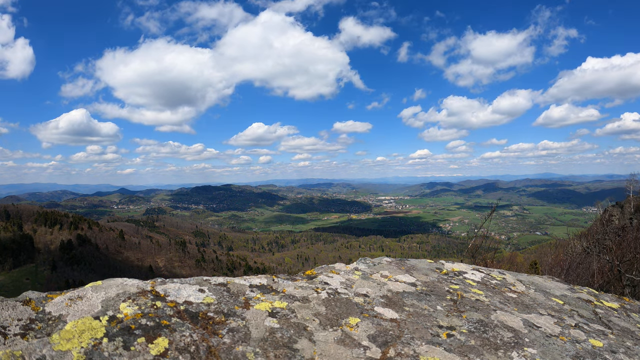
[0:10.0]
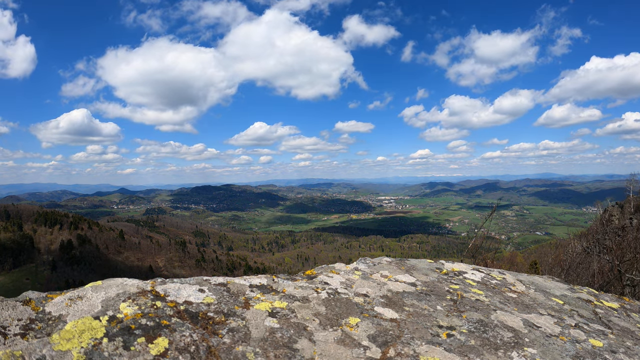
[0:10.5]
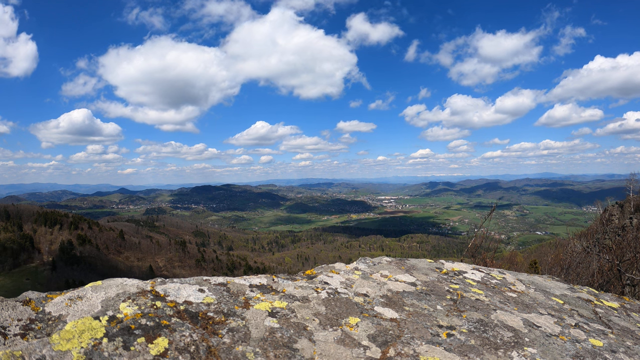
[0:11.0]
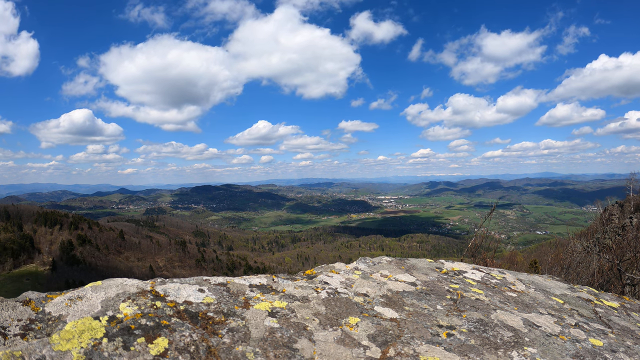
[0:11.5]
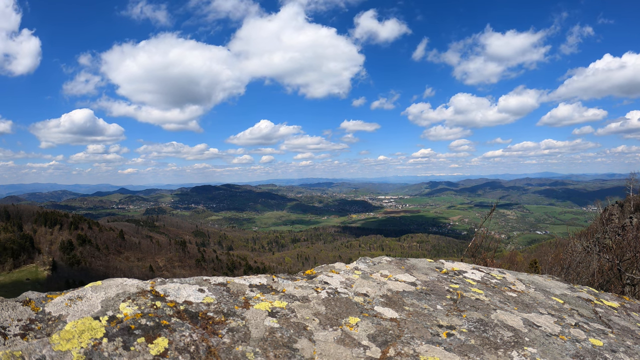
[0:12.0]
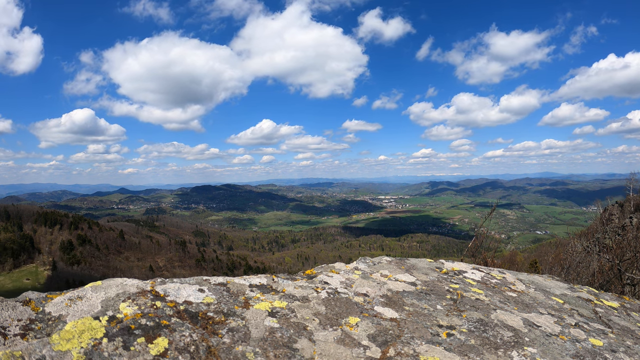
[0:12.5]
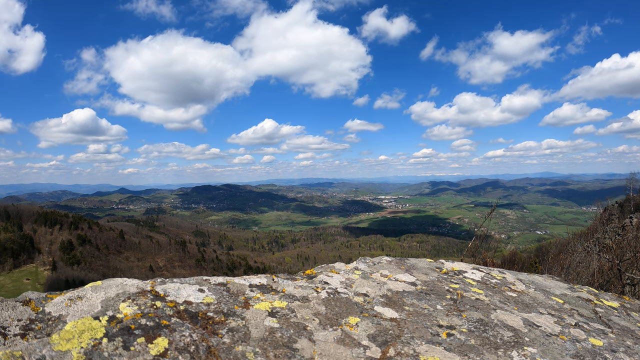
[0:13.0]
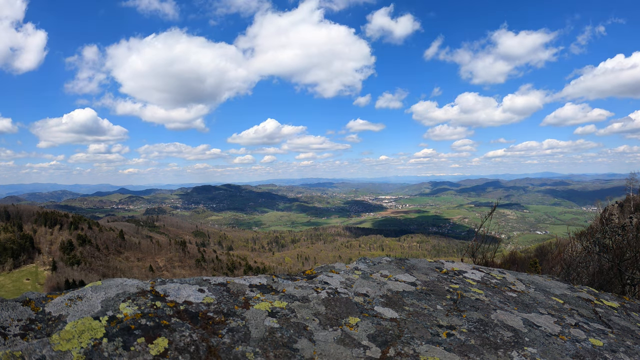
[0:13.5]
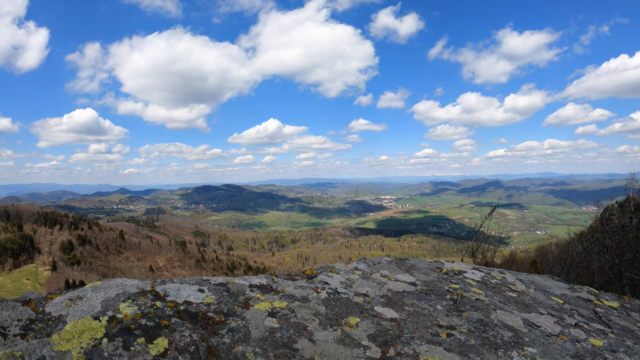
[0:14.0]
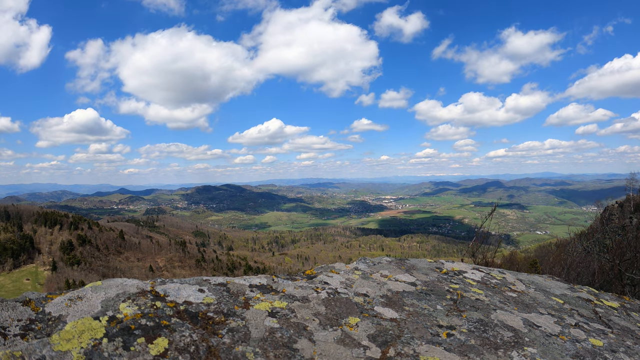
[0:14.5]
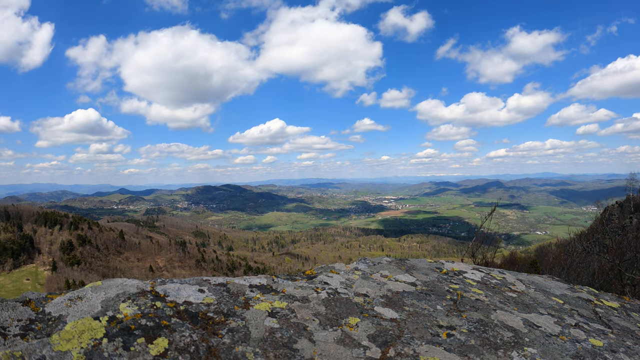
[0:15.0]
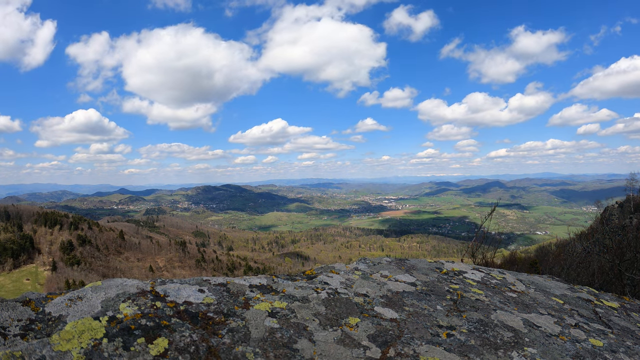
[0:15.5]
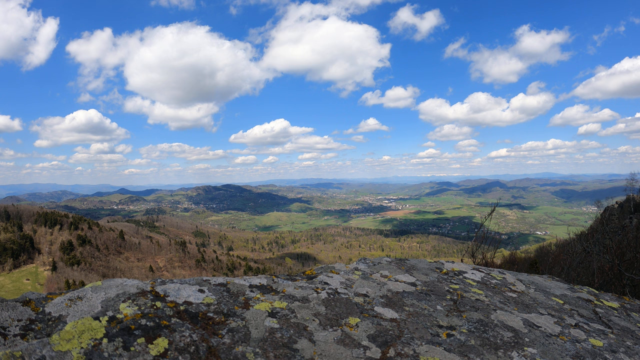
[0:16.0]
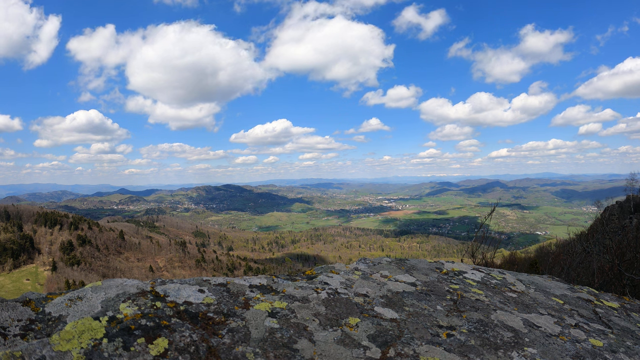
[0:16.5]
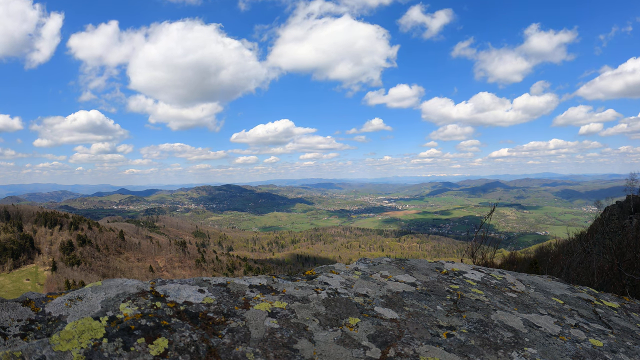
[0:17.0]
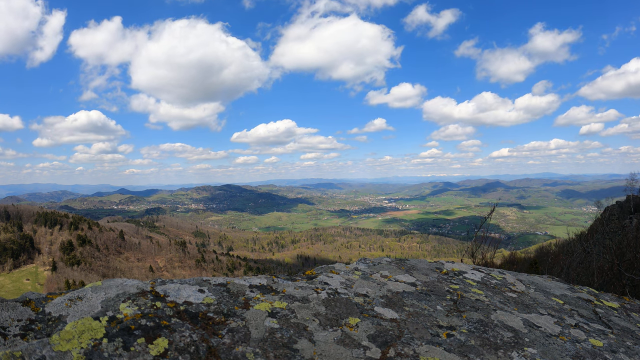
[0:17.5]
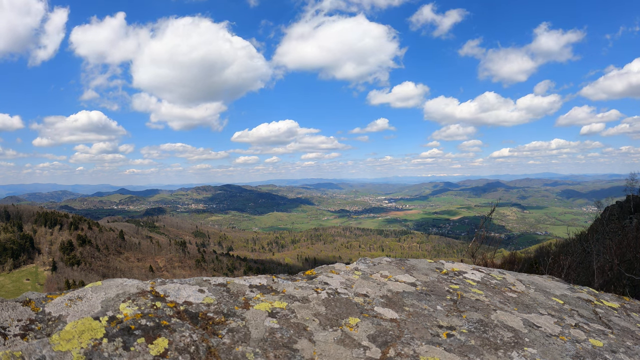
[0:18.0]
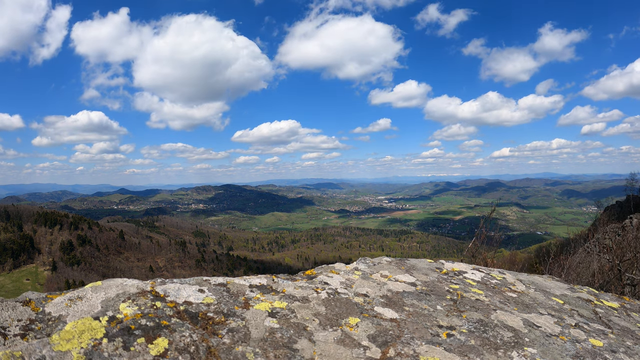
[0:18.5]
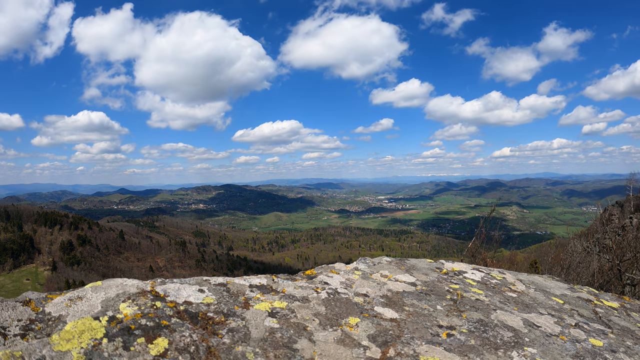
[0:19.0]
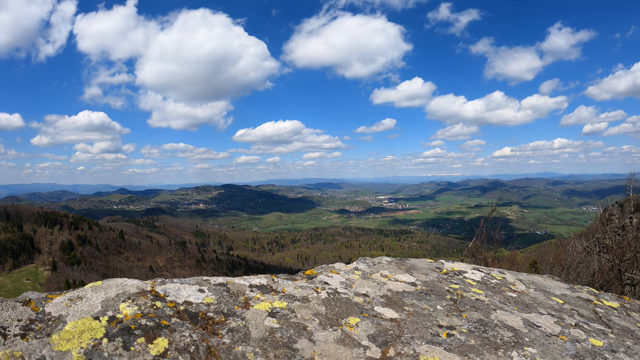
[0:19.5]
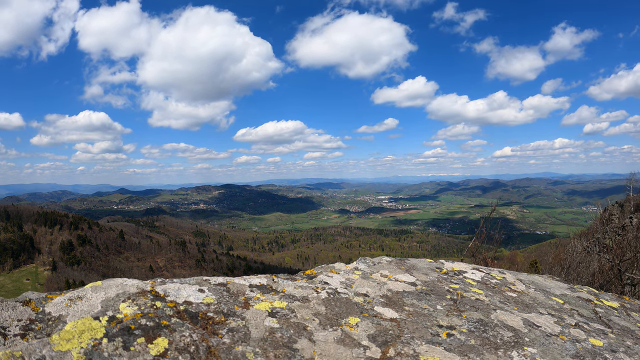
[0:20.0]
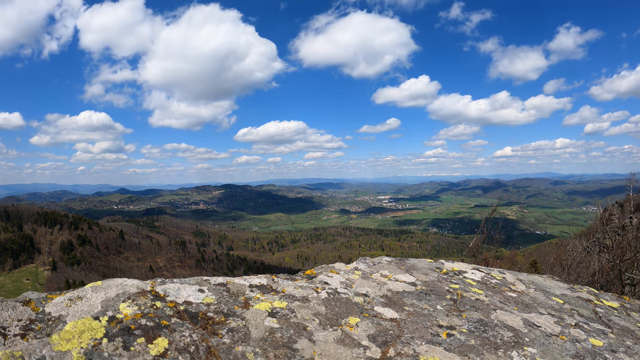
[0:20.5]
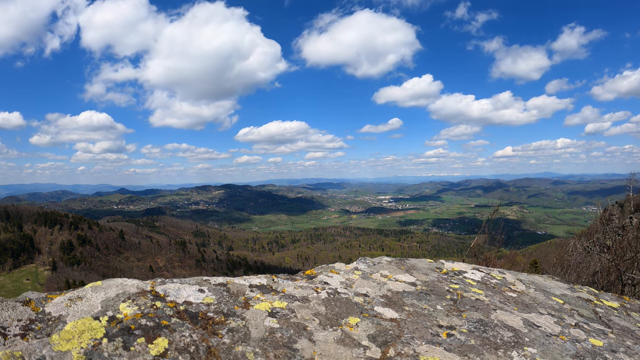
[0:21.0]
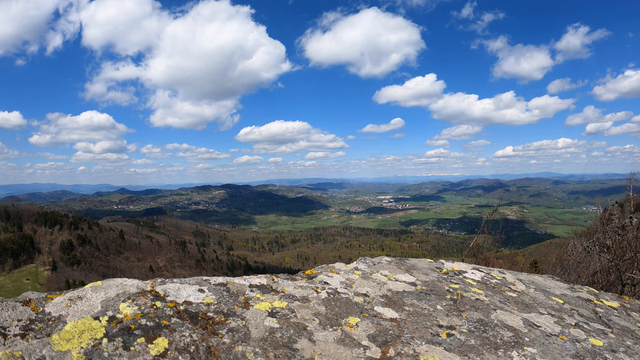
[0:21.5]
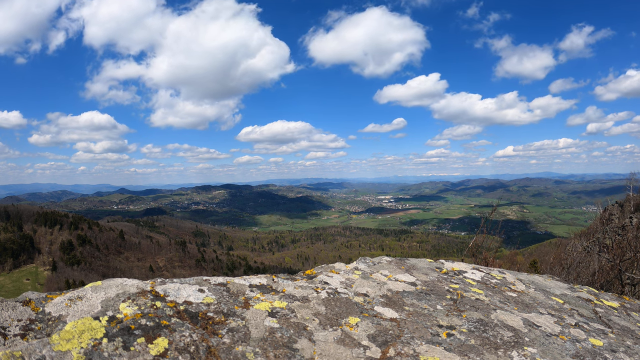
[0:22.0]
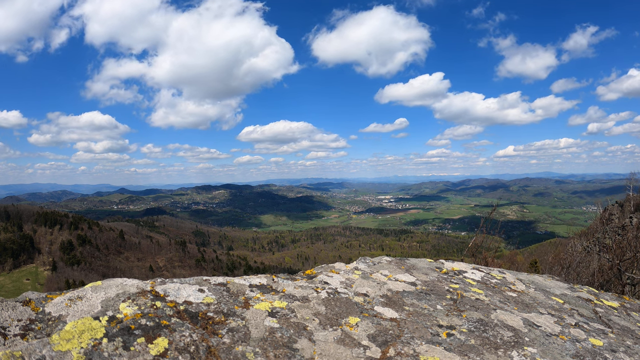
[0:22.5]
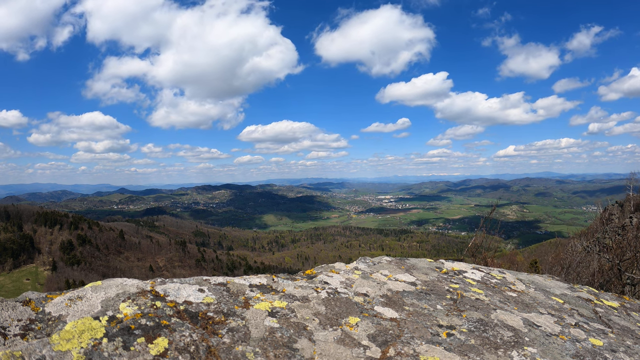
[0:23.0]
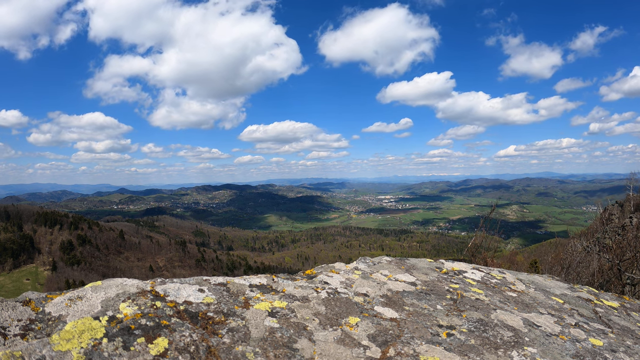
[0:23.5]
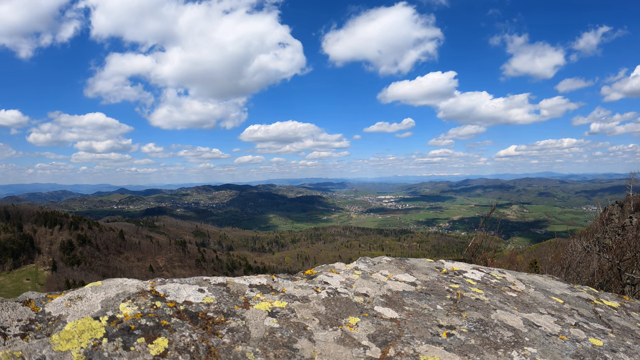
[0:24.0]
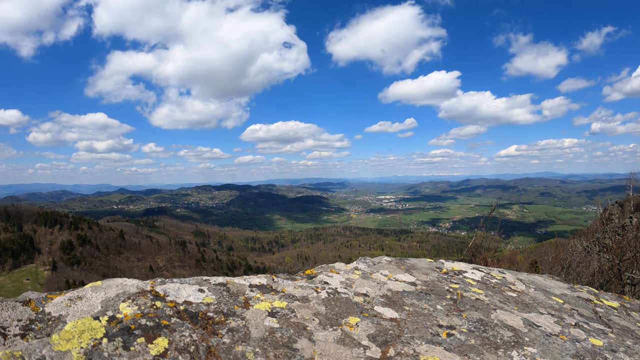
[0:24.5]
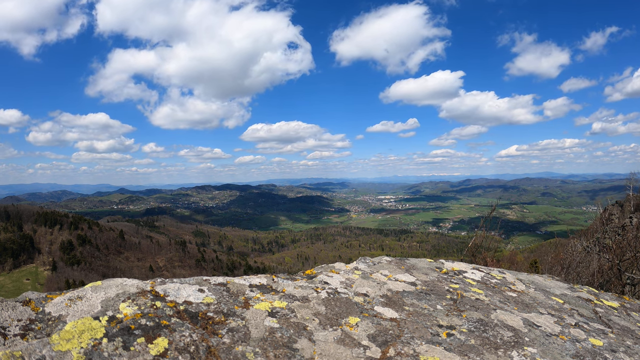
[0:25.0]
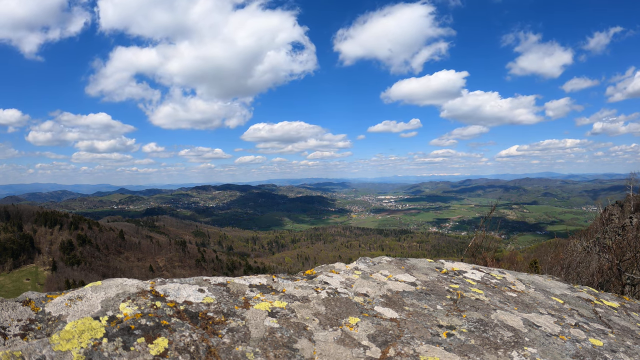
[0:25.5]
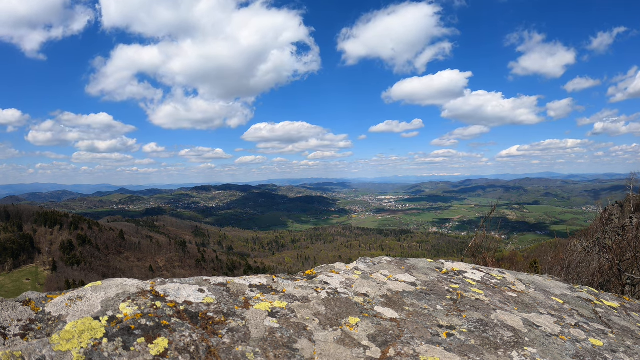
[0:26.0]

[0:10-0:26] The lighting changes as the clouds pass over. The scene starts off fairly dark, apparently because a cloud is above where the camera is situated. Halfway through, the sun shines through and lights up the place. The rock near the camera becomes much clearer: moss, lichen and other things that grow on rock are growing on it, with bright yellows, whites, blacks and greys. The rock itself is grey. Further in there are brown trees and green trees, and some hedges nearby, some of which look fairly bare. As the clouds roll through the blue sky, they cast shadows on the fields and villages beneath. The sky is mostly clear and blue.